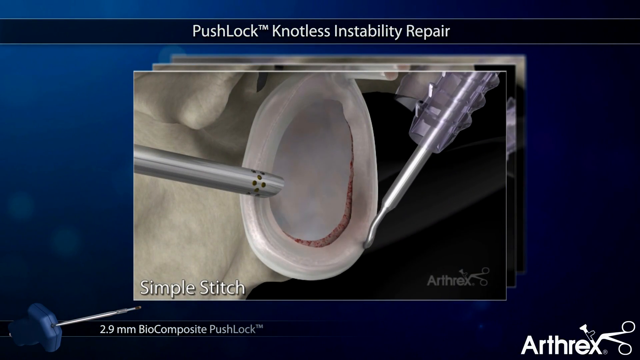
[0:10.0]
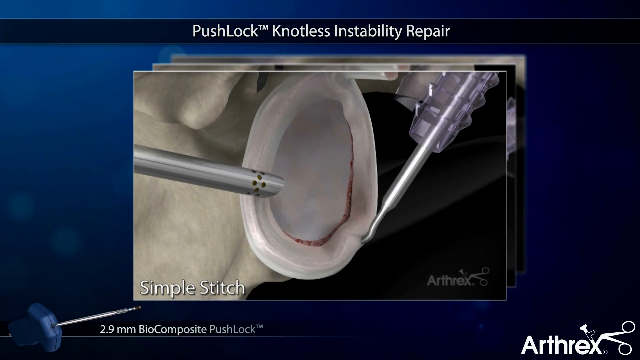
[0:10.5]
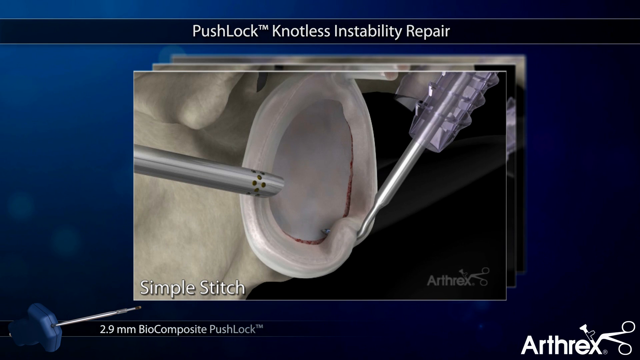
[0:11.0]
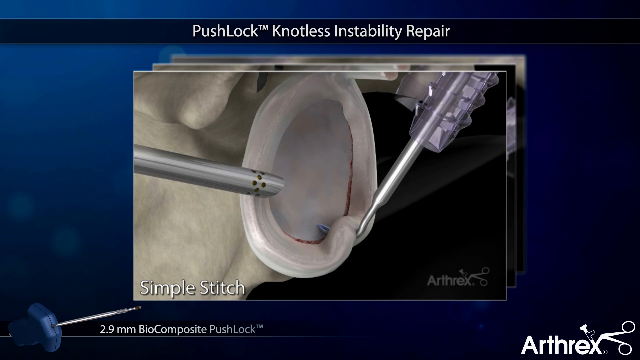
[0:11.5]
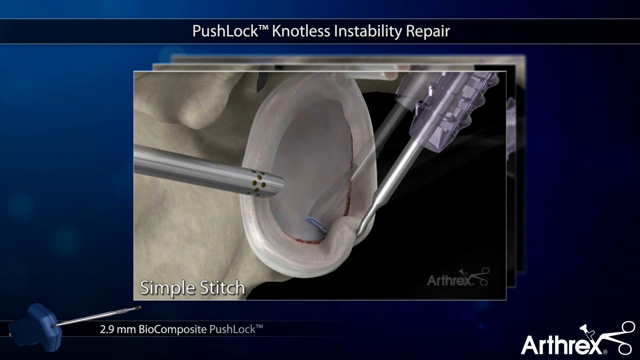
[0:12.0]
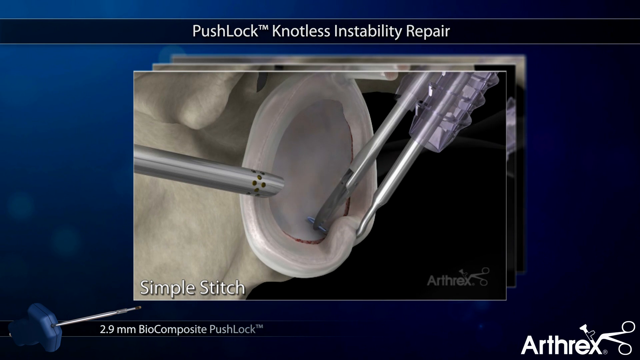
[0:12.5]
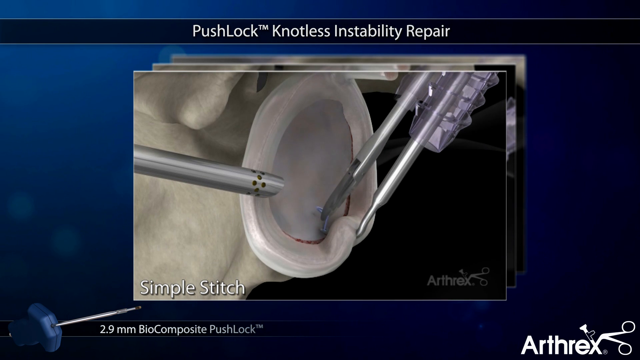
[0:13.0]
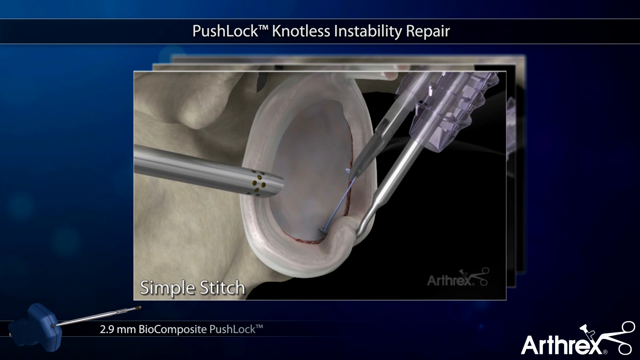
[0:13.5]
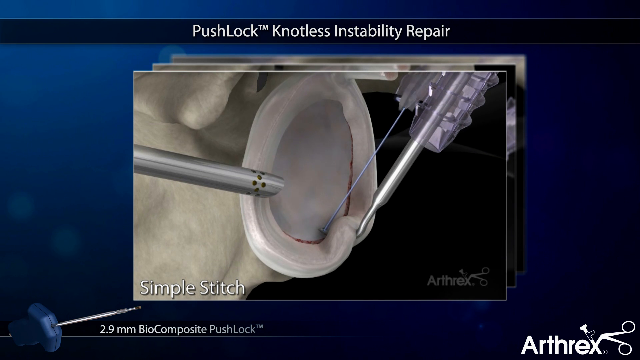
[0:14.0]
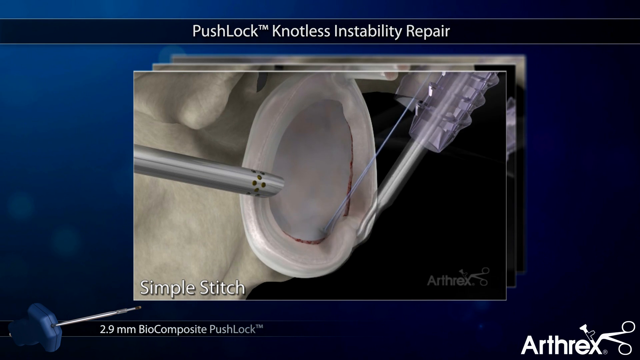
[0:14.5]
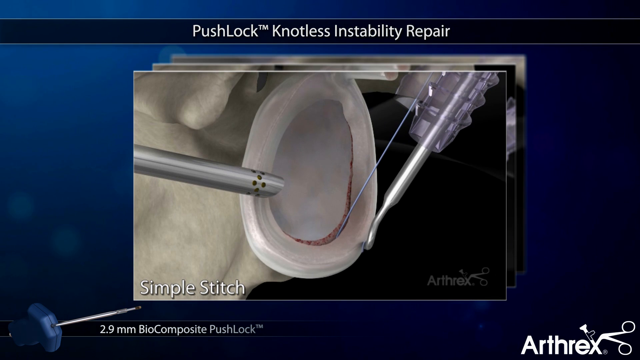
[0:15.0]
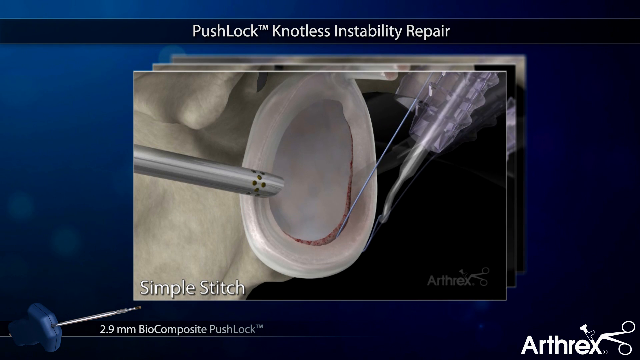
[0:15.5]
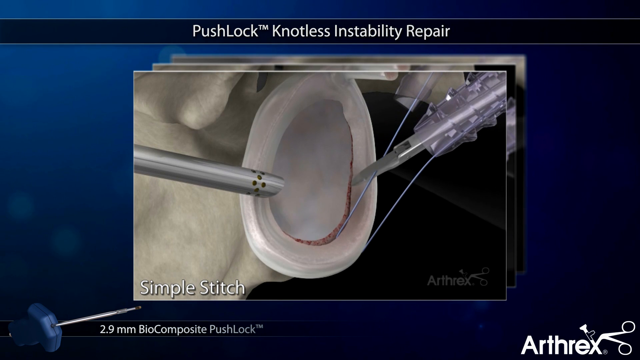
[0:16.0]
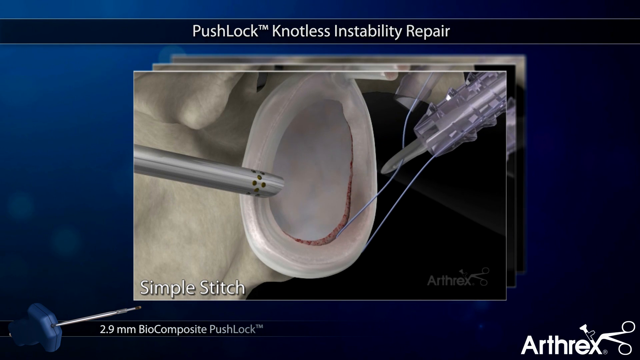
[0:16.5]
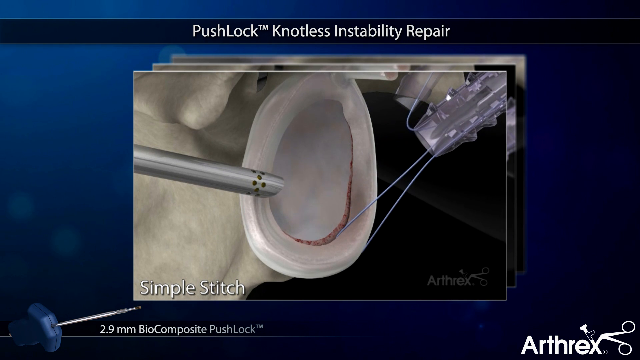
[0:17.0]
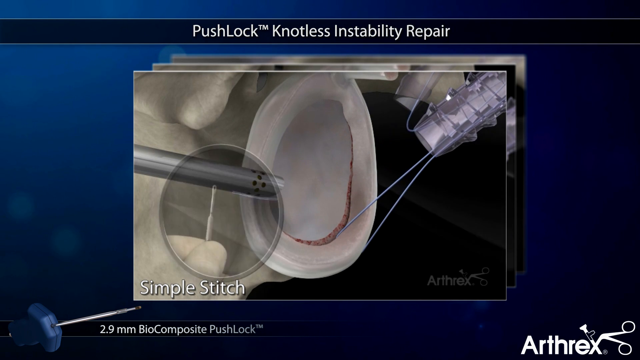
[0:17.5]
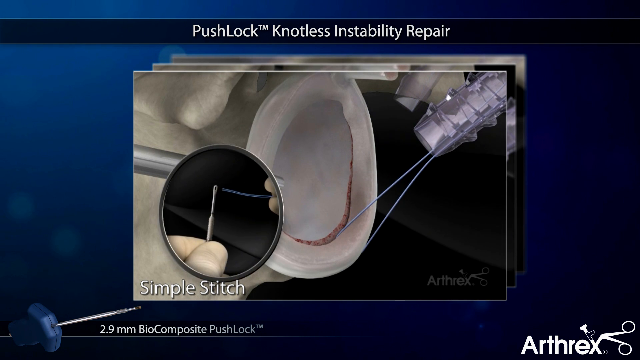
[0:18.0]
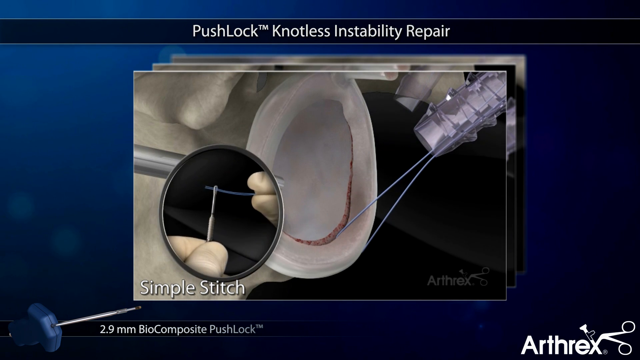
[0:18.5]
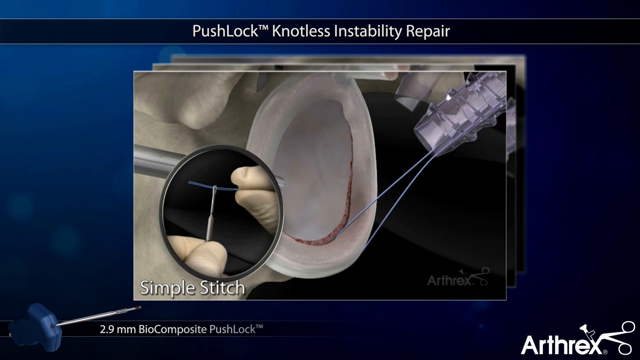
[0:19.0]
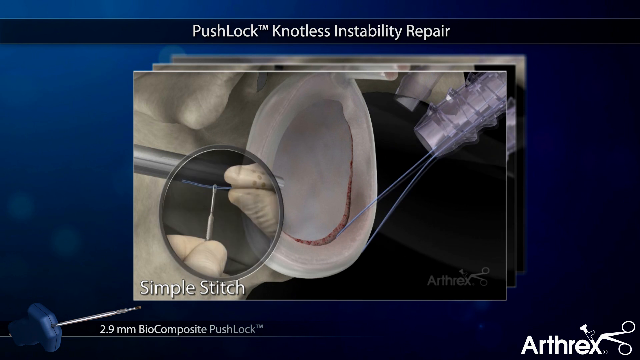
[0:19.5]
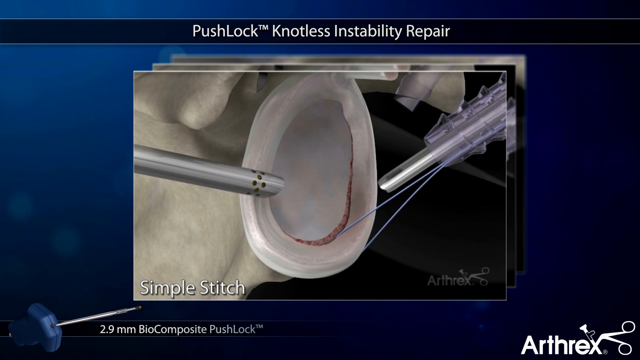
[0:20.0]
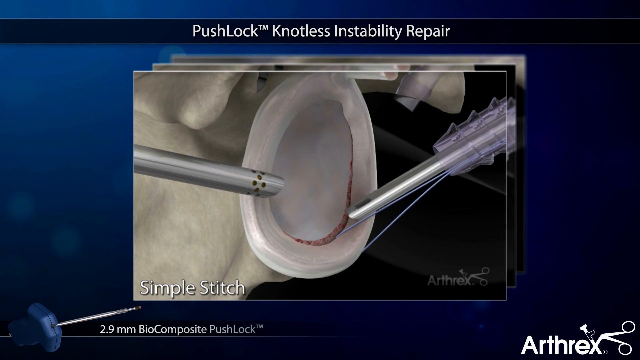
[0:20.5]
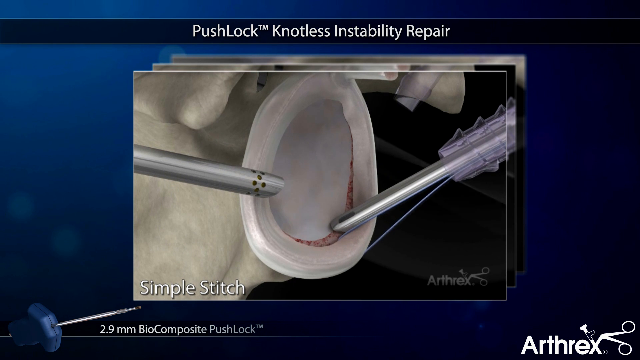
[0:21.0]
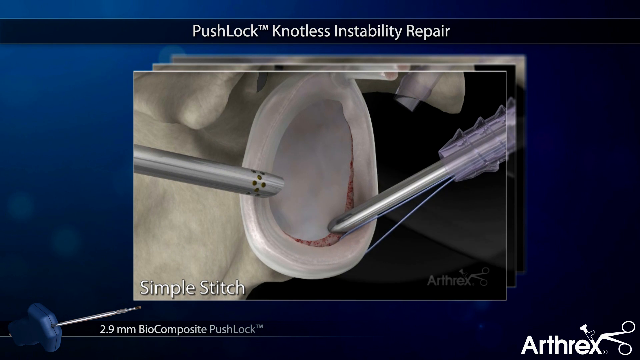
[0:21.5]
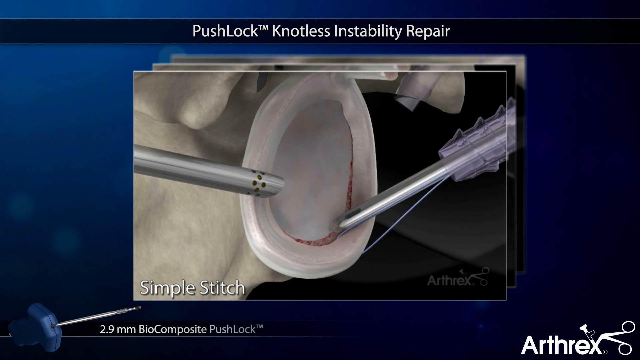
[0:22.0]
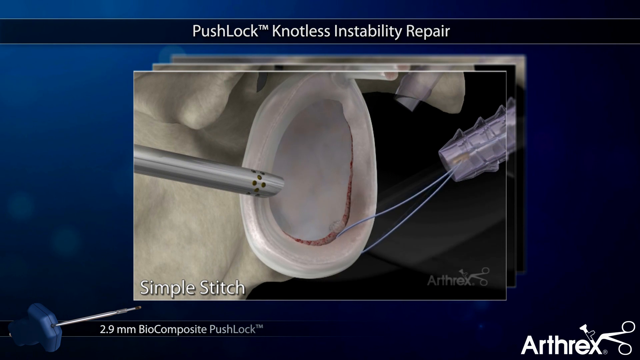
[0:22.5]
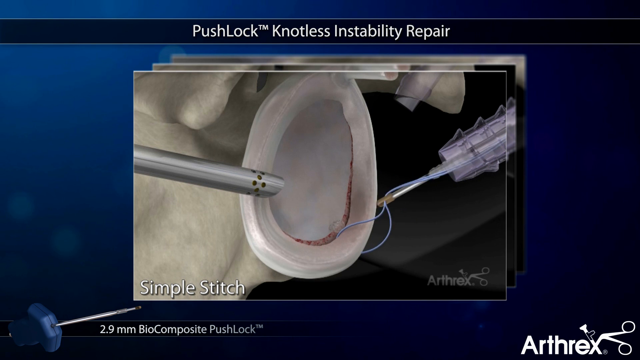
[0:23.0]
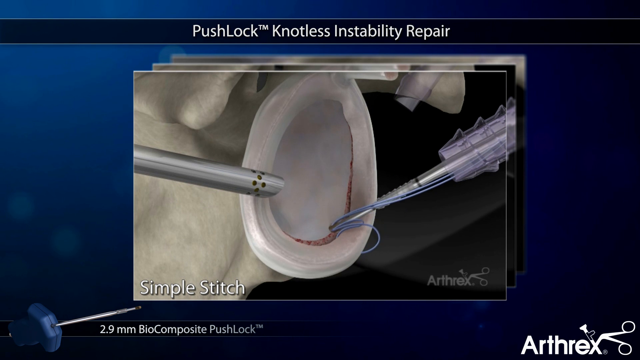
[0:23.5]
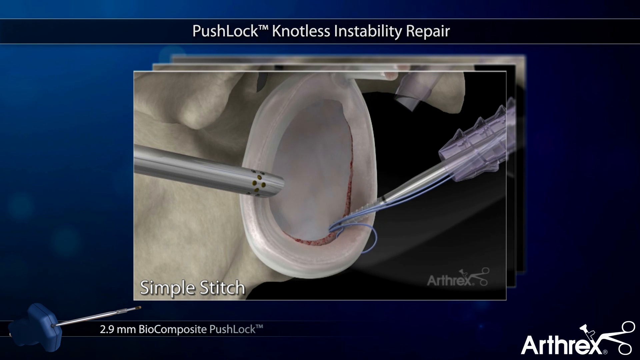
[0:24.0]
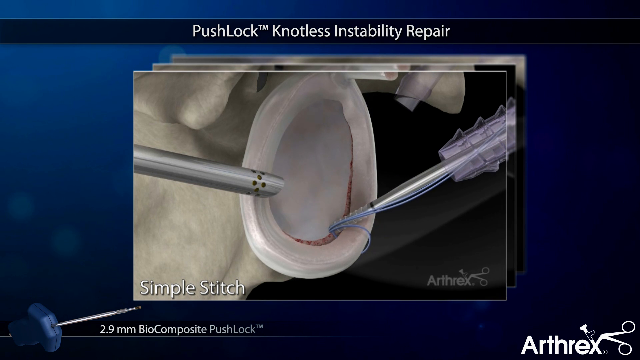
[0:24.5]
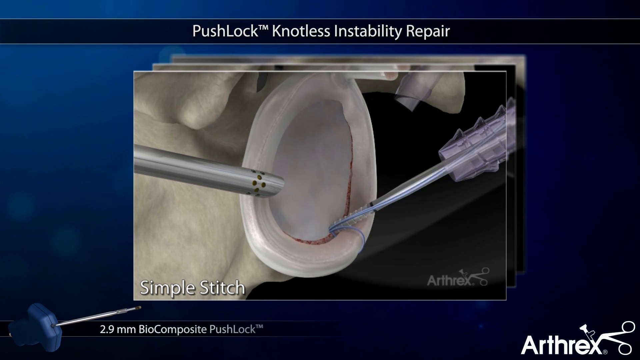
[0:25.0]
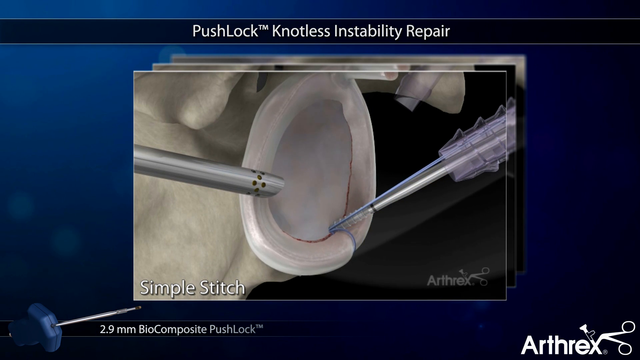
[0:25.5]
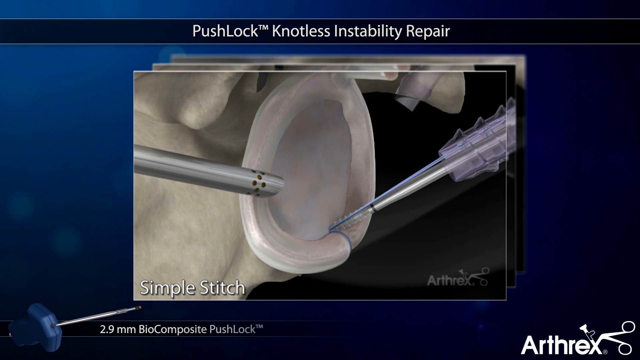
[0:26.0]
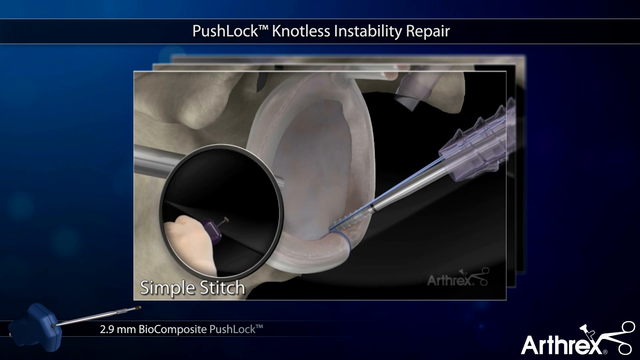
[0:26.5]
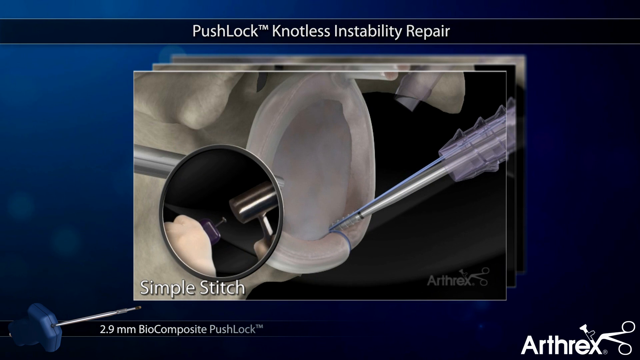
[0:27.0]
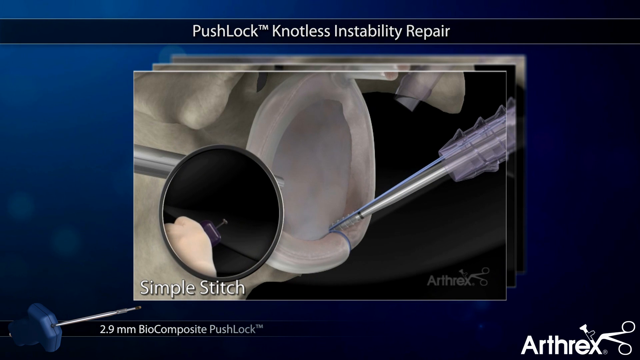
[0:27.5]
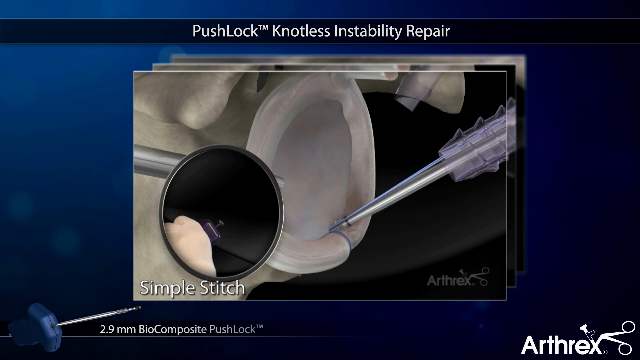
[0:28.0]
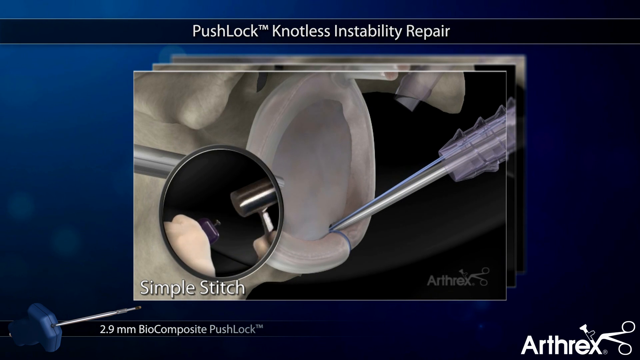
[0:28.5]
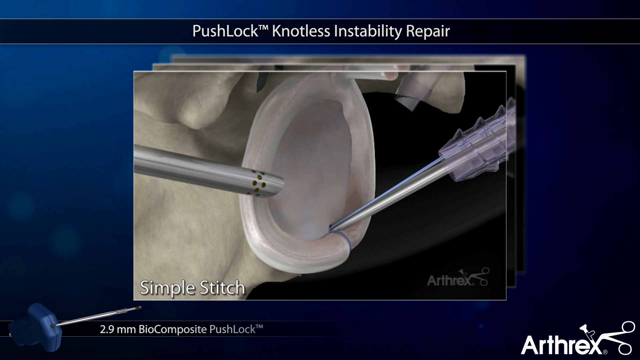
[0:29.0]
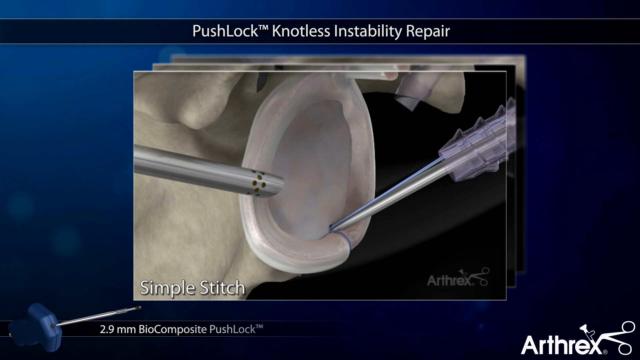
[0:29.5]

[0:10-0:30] Two silver implements manipulate the silicone object. The one on the left is thicker, more like a prod or a holder, while the one on the right is very slender and looks like it has thread coming out of it. They start by what looks like creating a stitch, and an inset shows someone threading a needle. A third implement then comes in with the second one, apparently pulling the thread through and then pulling it tight, creating a kind of indentation in the silicone object. Meanwhile, the inset shows someone with a small hammer hammering something like a nail into an unclear object. The title "push lock knotless instability repair" is at the top of the screen. The background is black, and the whole thing is set in a dark blue slide.